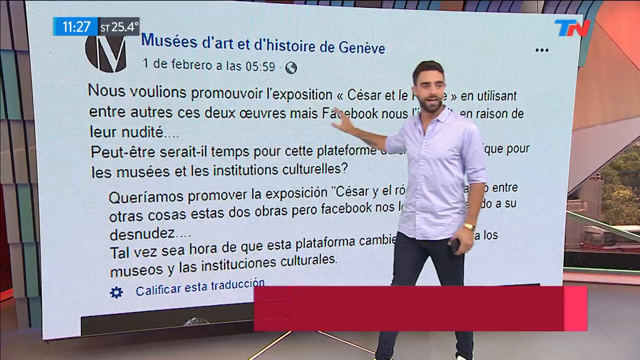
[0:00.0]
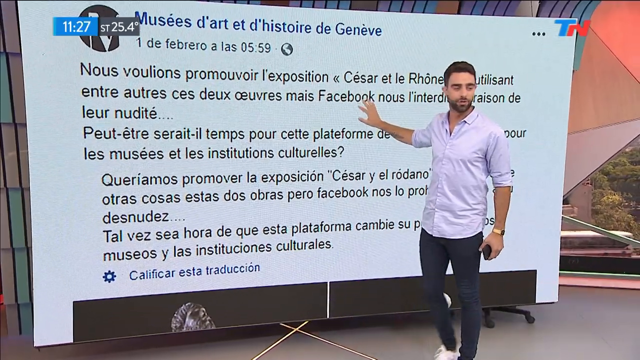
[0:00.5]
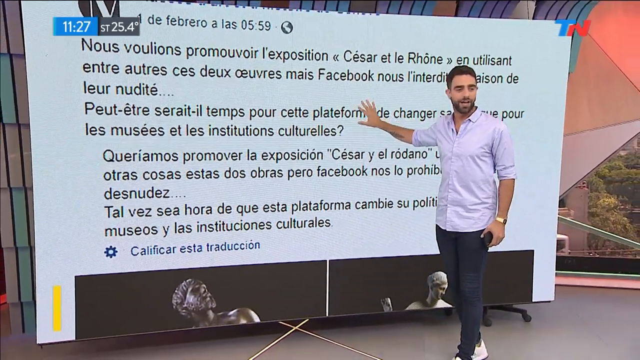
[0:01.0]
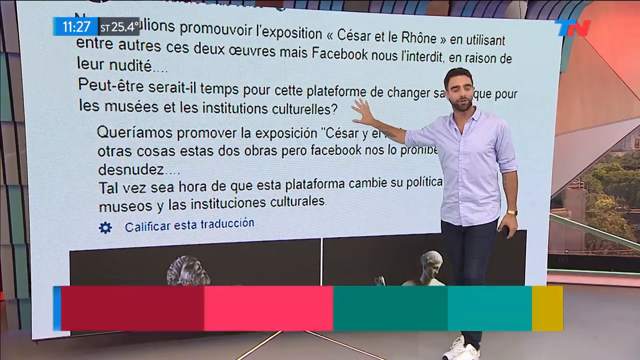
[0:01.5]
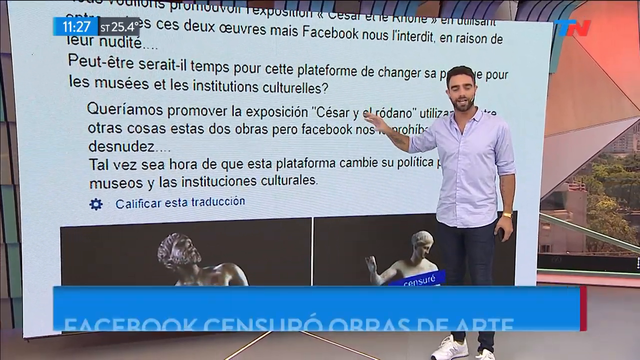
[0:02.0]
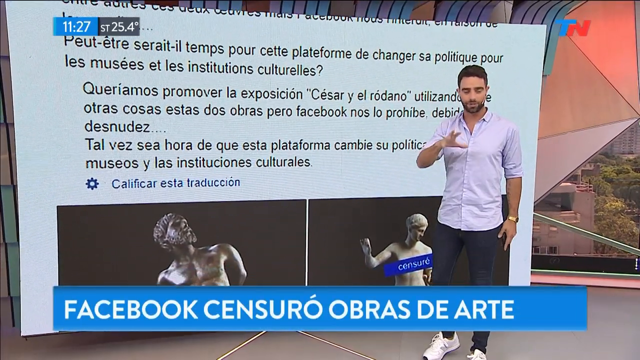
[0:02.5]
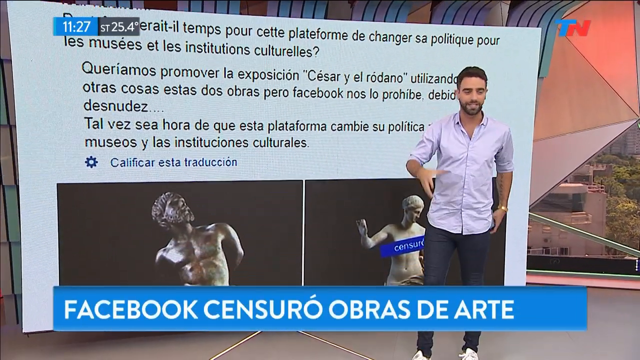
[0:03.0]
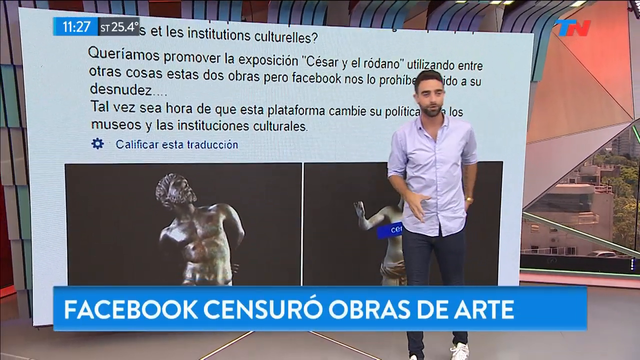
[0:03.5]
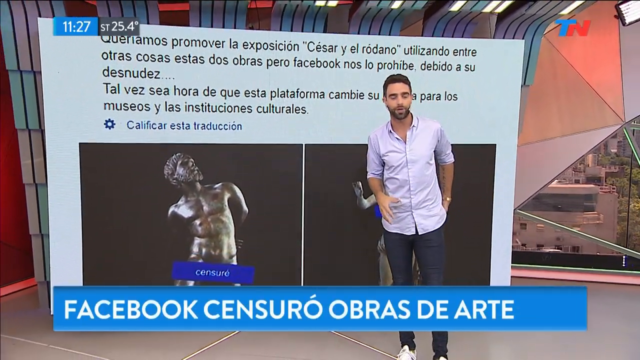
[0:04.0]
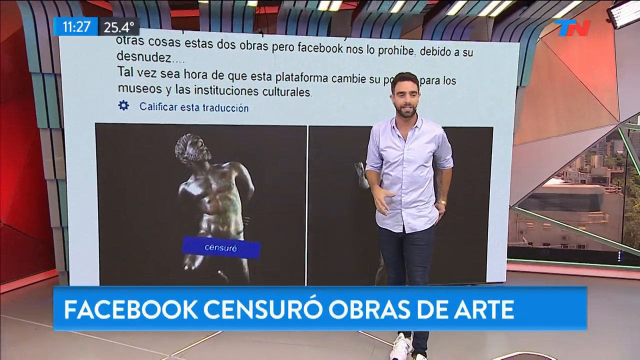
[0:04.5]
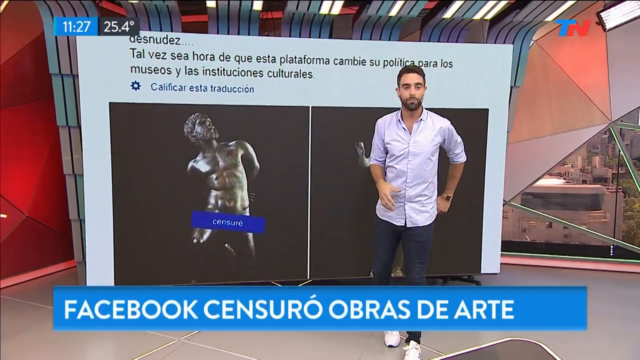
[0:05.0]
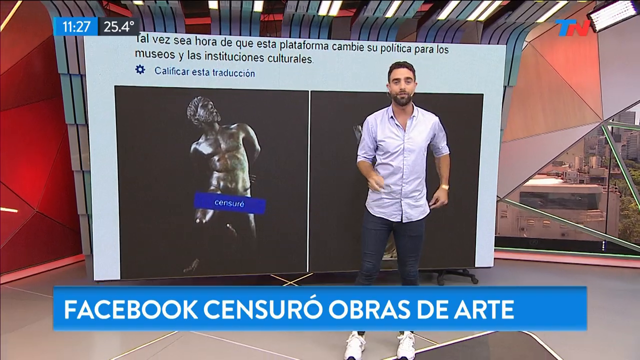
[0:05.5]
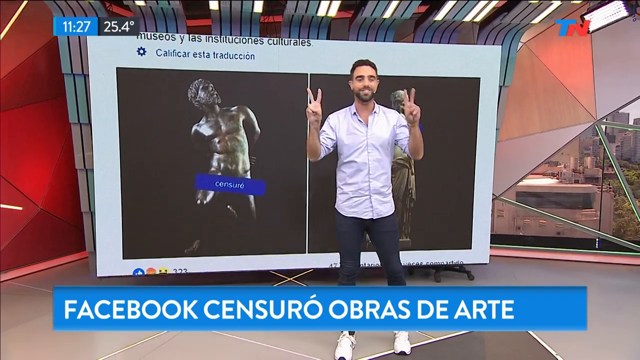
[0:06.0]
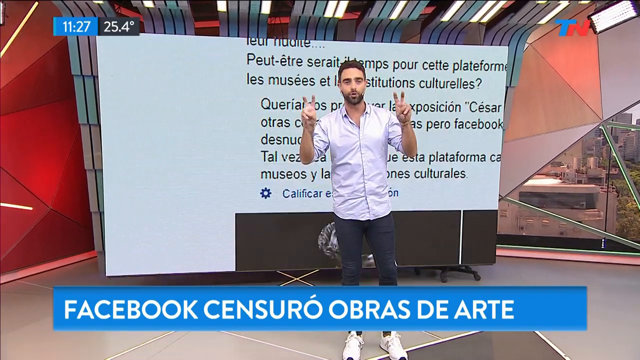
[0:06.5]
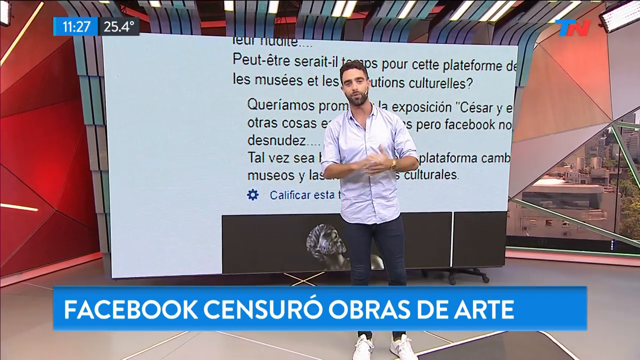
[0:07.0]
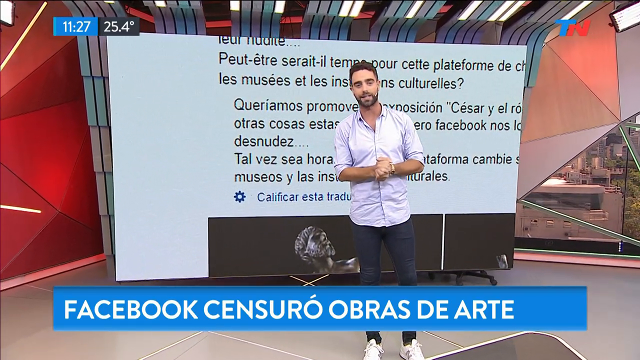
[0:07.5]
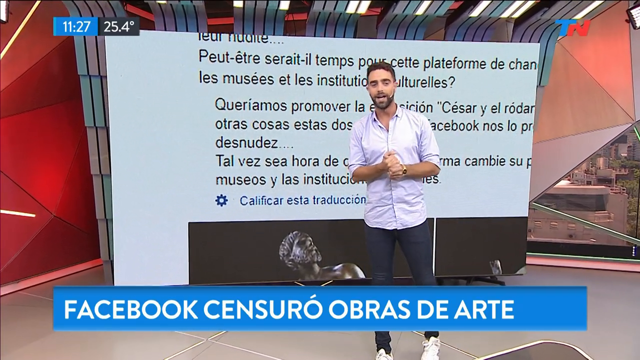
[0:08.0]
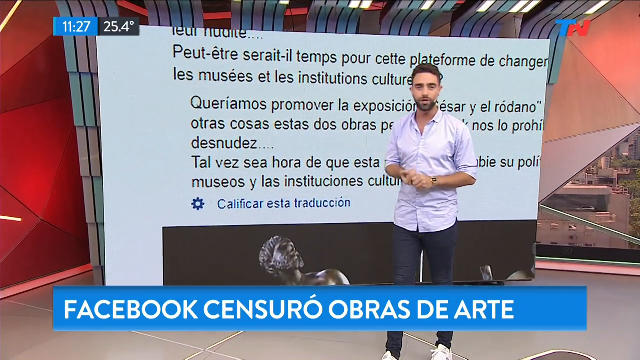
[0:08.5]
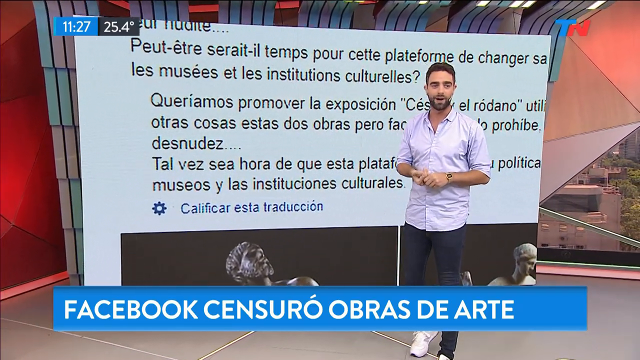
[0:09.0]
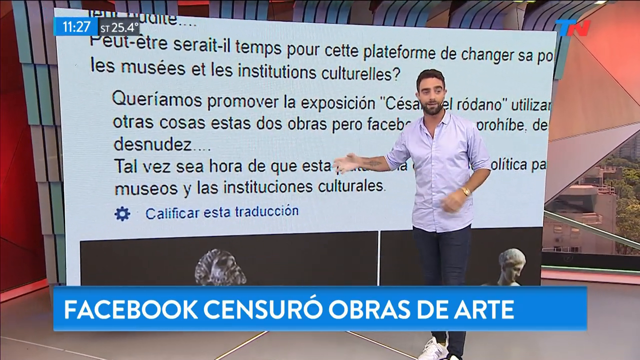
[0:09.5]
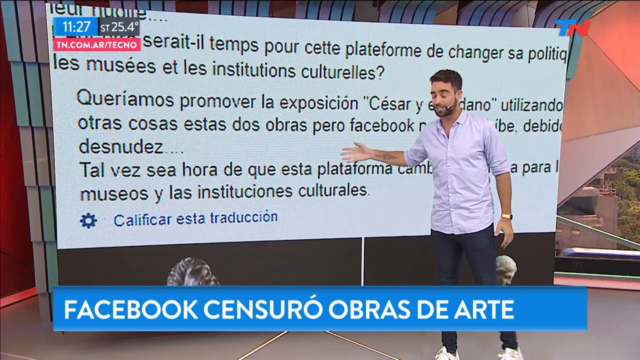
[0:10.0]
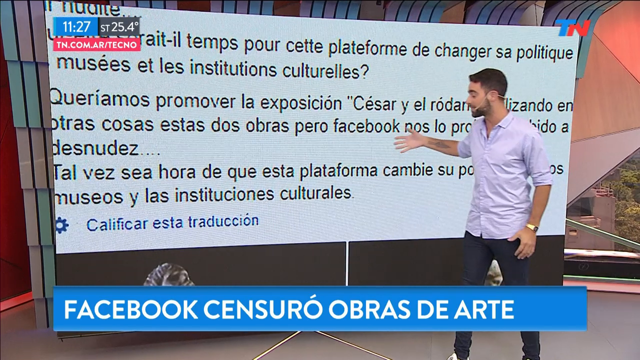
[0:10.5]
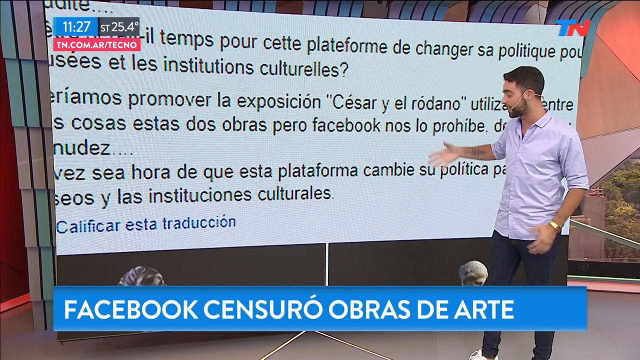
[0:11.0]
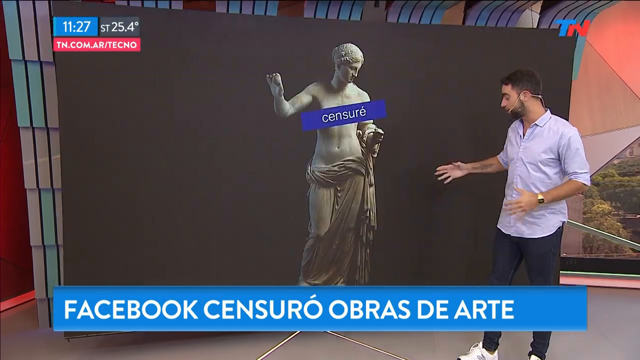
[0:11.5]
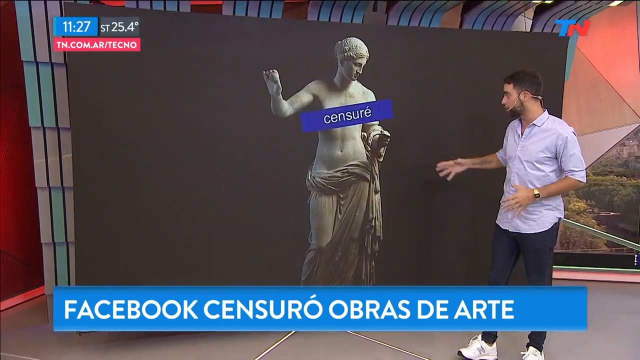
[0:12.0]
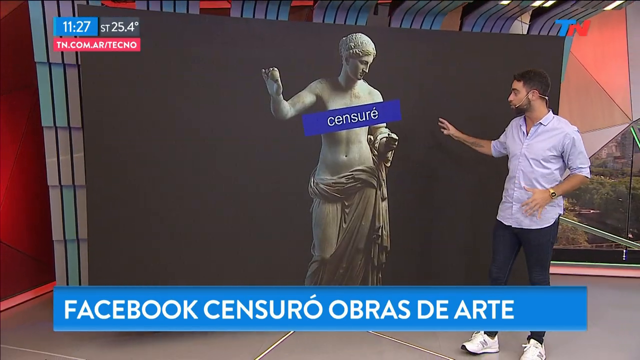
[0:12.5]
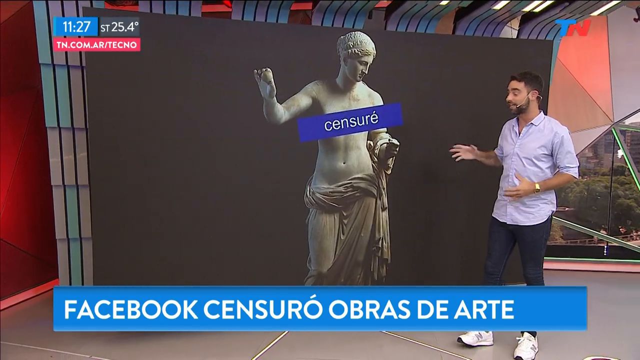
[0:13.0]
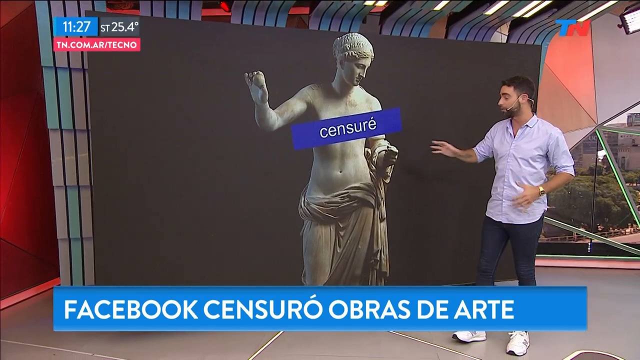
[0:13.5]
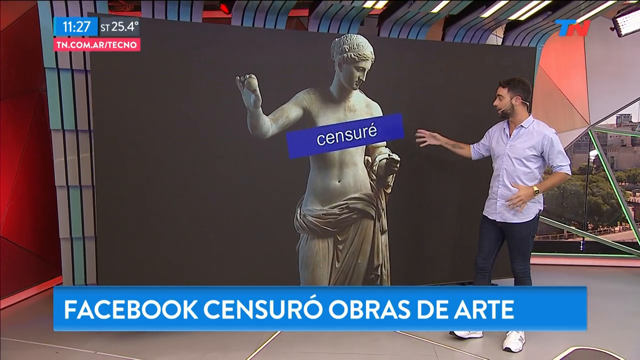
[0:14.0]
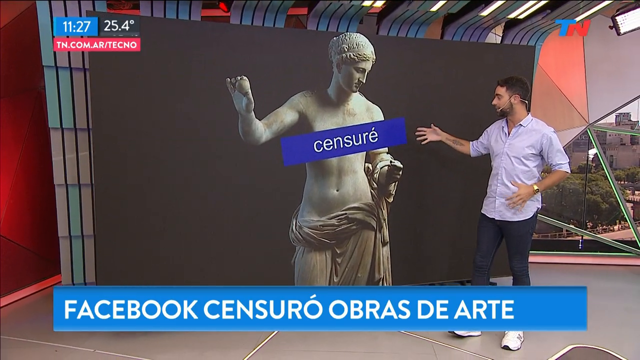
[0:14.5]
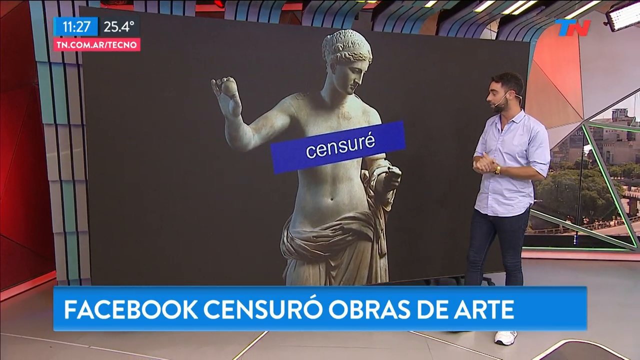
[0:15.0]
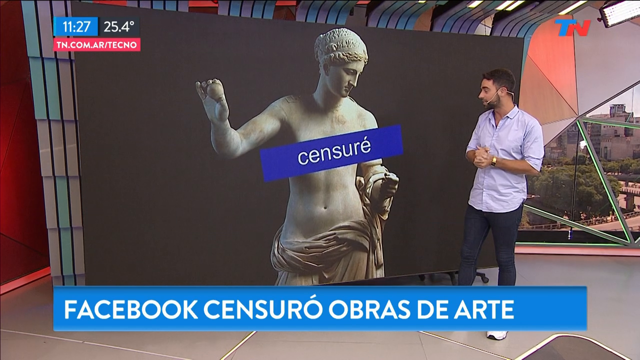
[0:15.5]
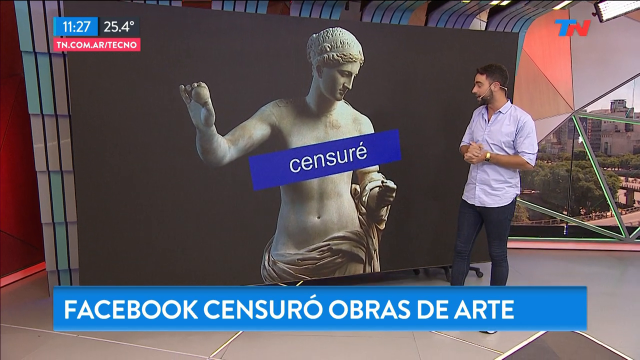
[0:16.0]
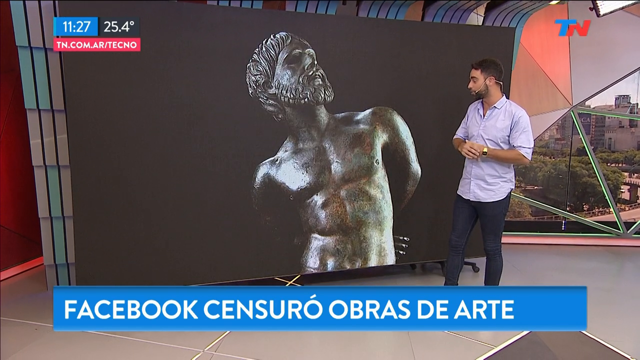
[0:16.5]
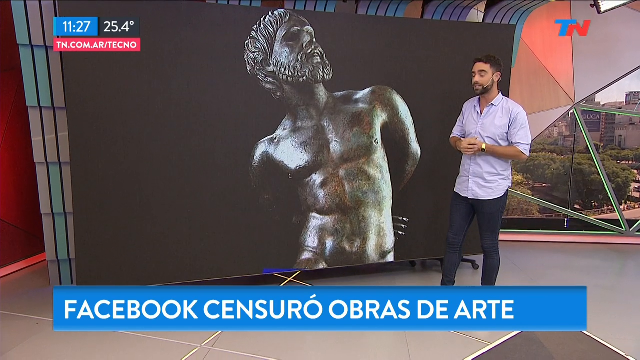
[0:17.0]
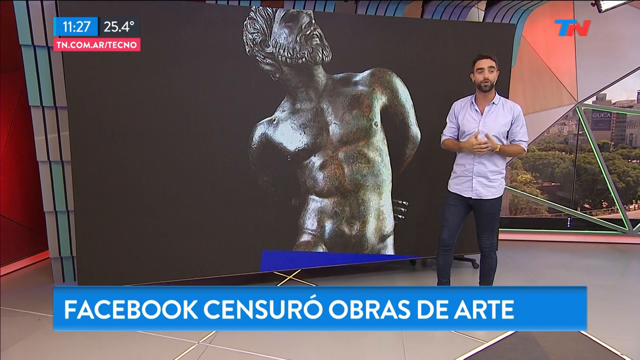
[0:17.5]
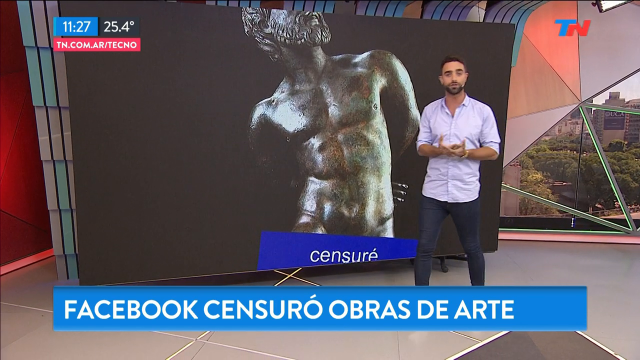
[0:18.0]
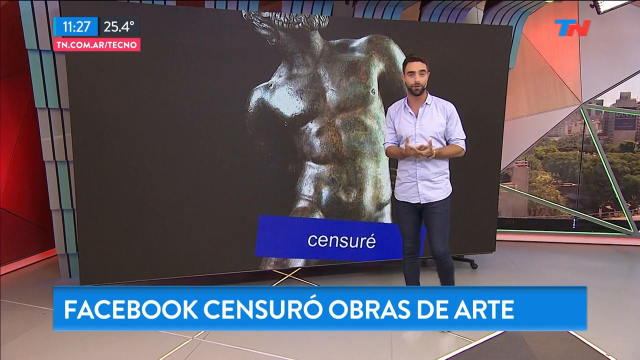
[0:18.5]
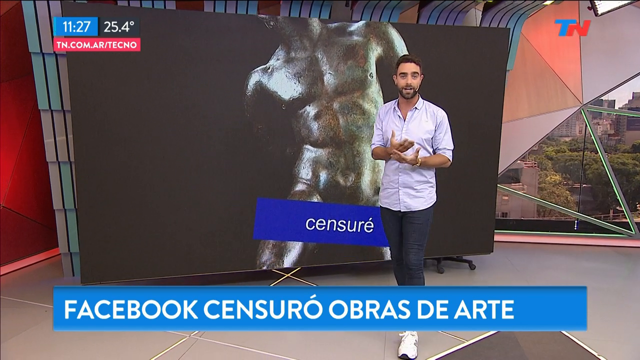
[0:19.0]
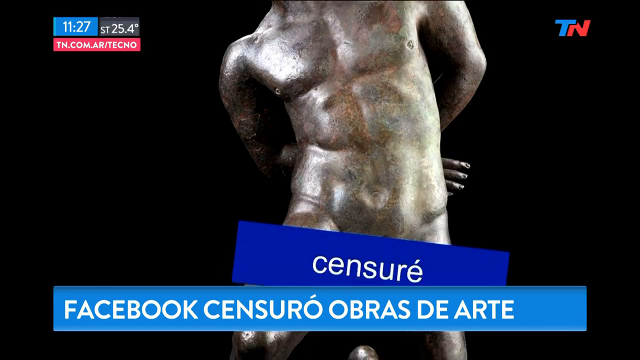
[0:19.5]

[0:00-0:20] A young man in a purple shirt and black trousers, wearing a watch on his left hand, shows a poster with words written in French. The poster shows portraits of people, including a man with a beard. The banner moves on what looks like a screen. The man points at the banner as he explains something, his facial expressions visible as he tries to describe what is on it.